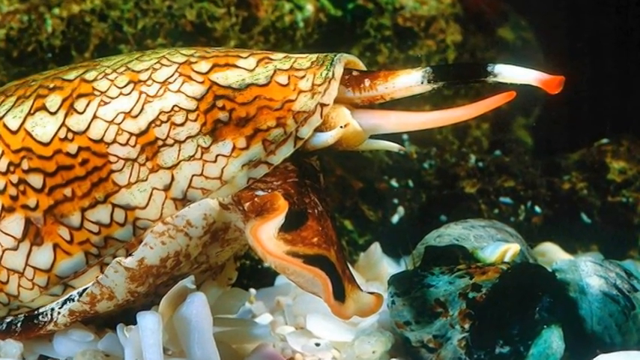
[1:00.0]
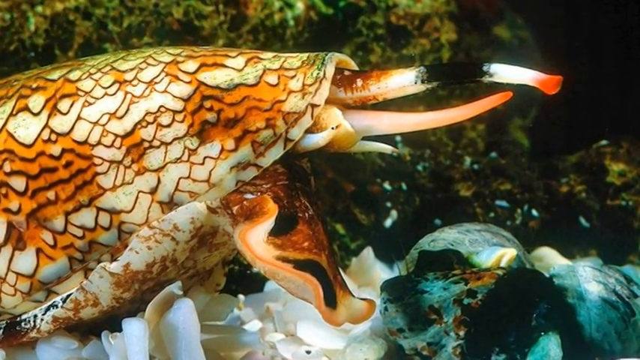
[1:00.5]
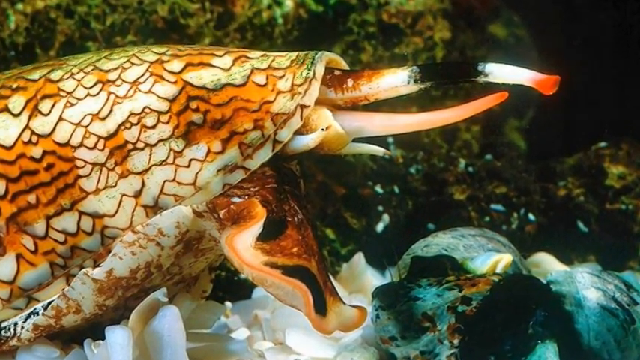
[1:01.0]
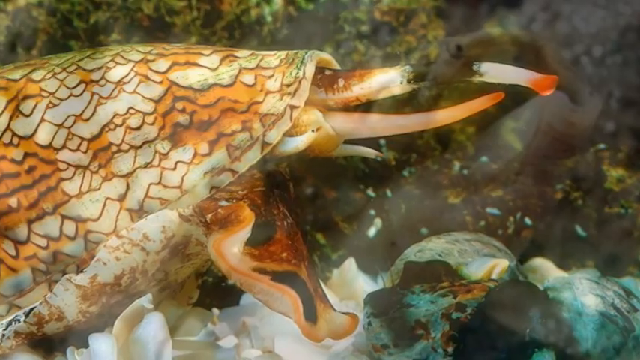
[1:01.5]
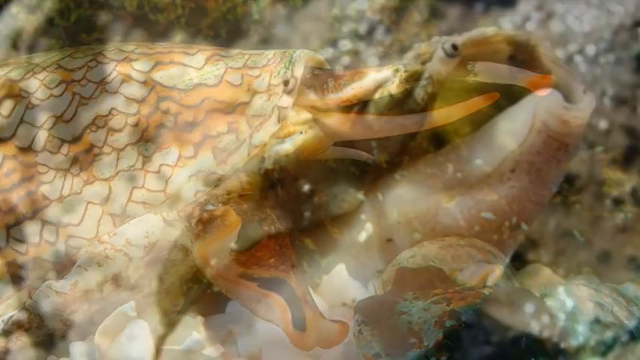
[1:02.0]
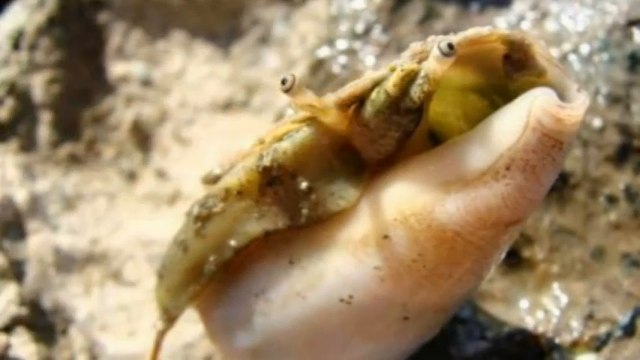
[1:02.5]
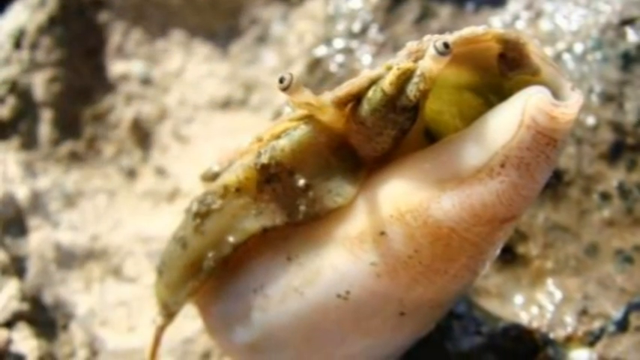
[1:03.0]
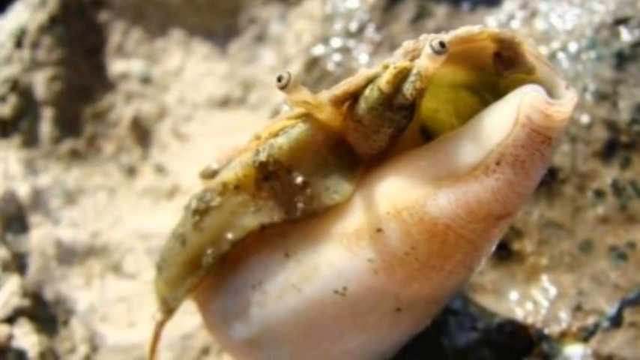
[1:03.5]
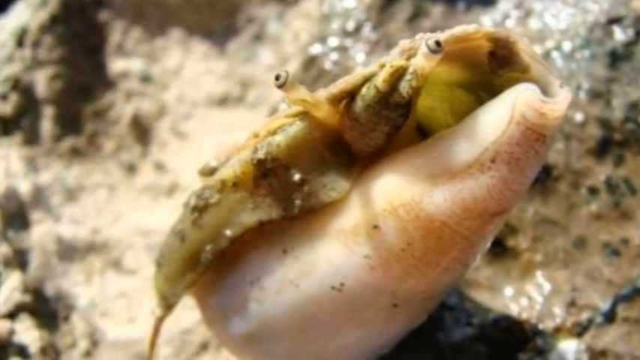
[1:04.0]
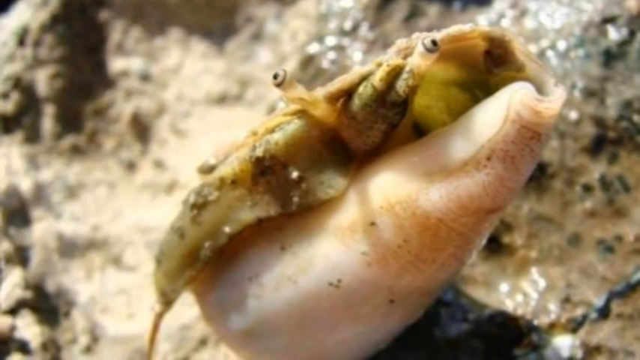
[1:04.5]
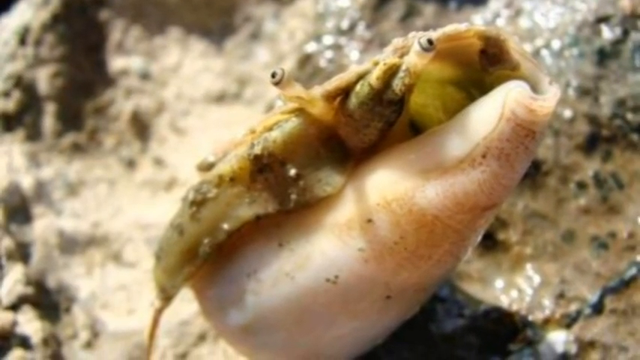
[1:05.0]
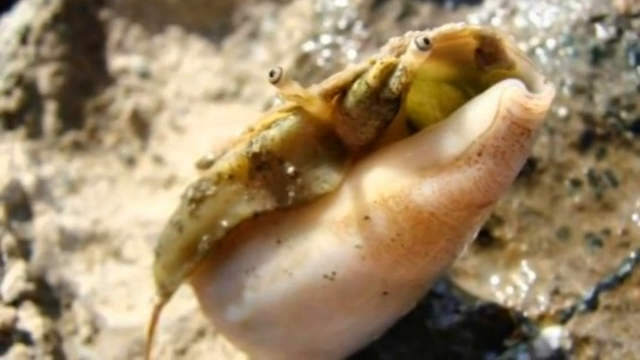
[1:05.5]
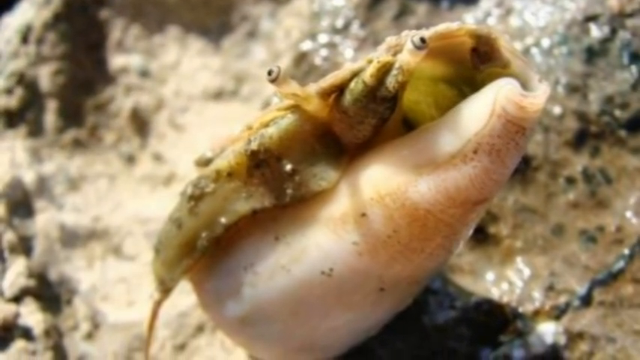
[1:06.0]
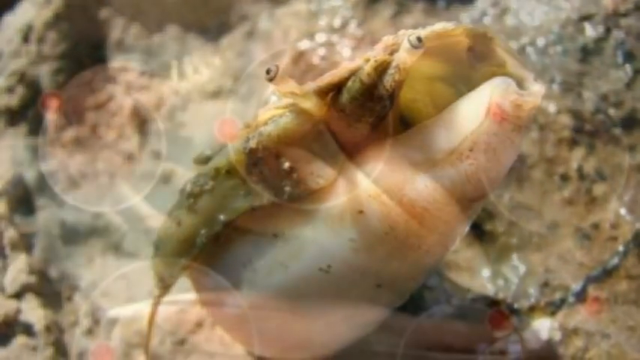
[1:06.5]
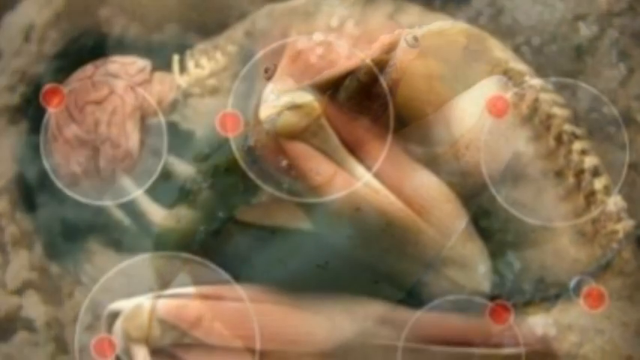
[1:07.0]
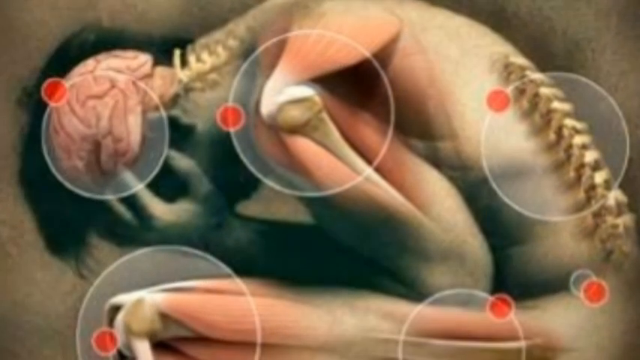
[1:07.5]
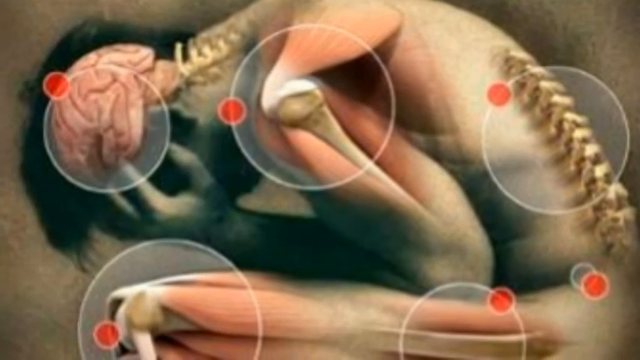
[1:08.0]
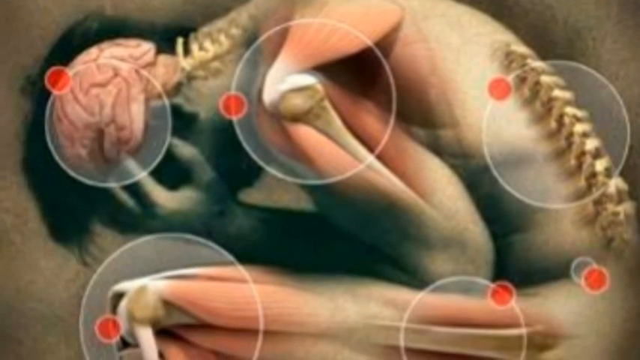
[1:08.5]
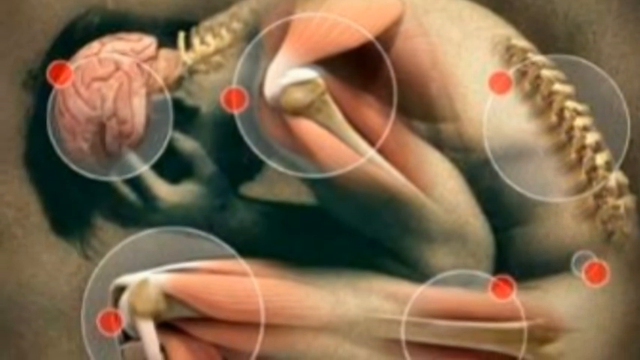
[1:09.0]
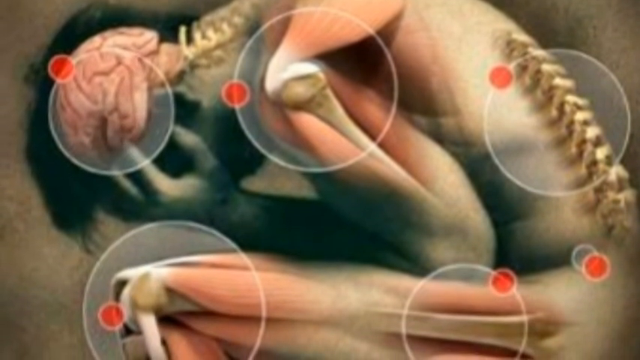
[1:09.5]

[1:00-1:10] After zooming into the patterned shell surface, the video shows the creature without its shell. Then a graphic of the human body appears with certain parts highlighted by red dots: a red circle over the brain area, then a circle by the shoulder area. A semi-cutaway of a person lets the viewer see through the body to the spinal cord, the bones and muscles, and the brain, with red points by the brain, by the spinal cord at the top and the bottom, and by the shoulder or neck muscles.